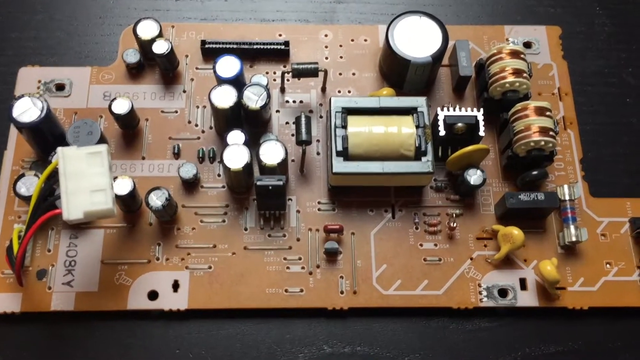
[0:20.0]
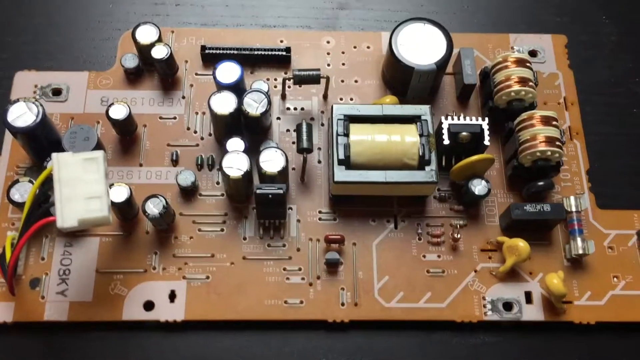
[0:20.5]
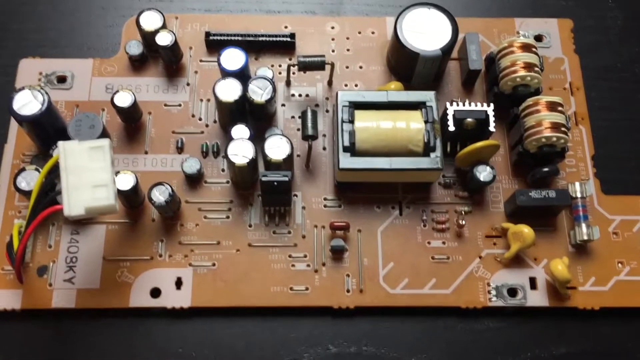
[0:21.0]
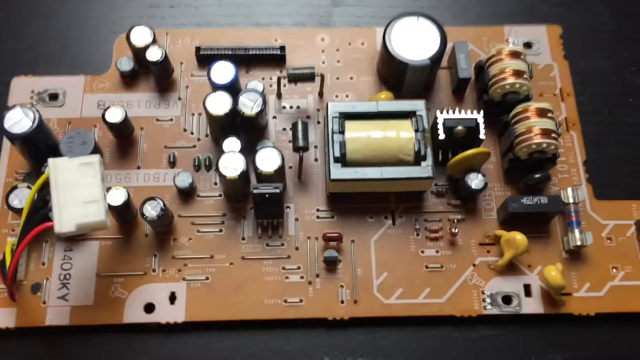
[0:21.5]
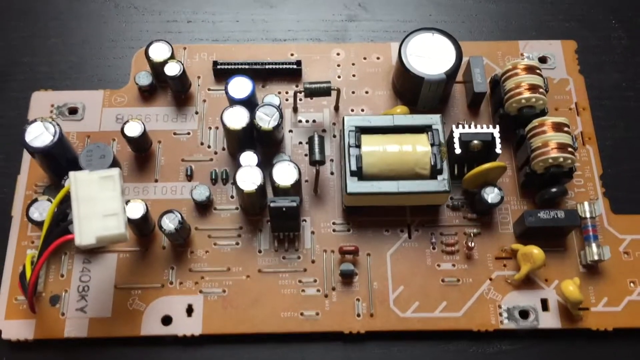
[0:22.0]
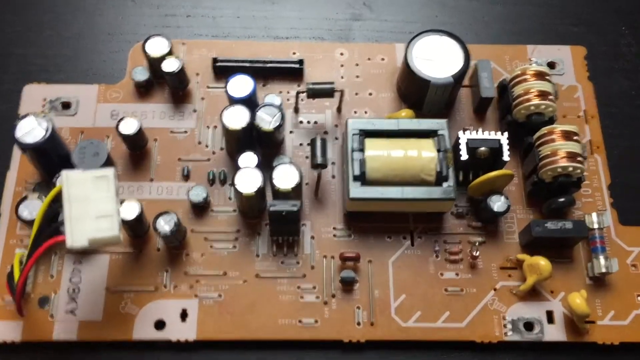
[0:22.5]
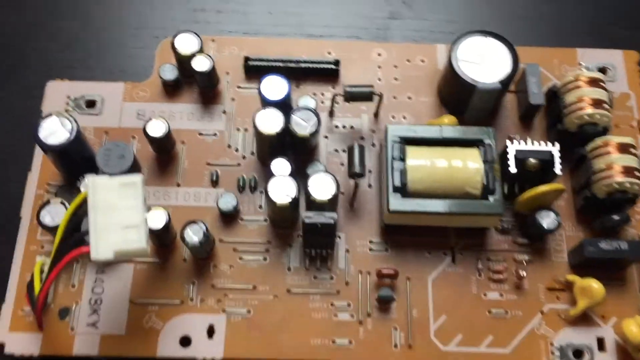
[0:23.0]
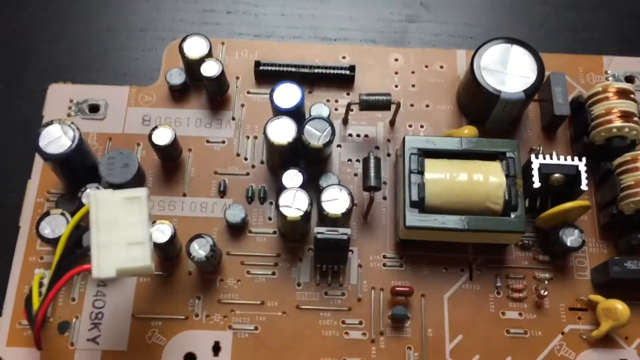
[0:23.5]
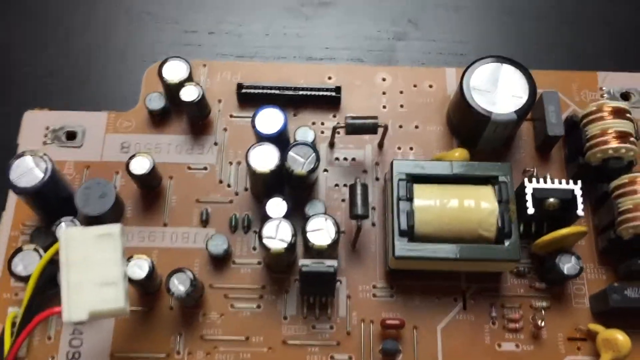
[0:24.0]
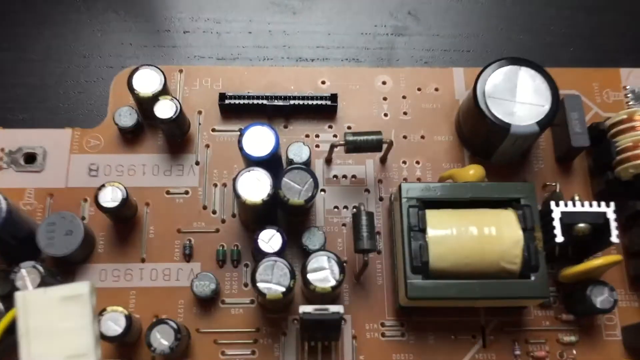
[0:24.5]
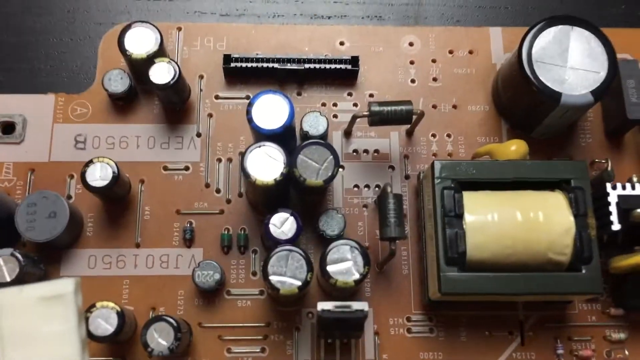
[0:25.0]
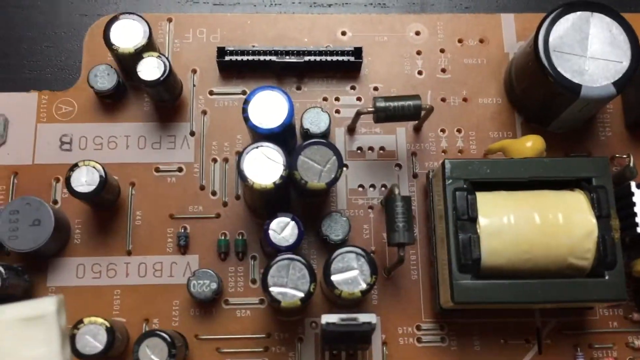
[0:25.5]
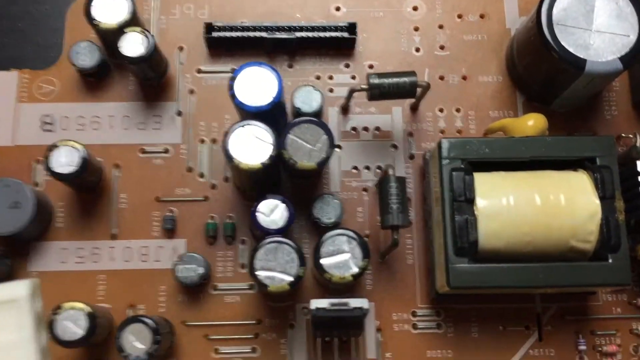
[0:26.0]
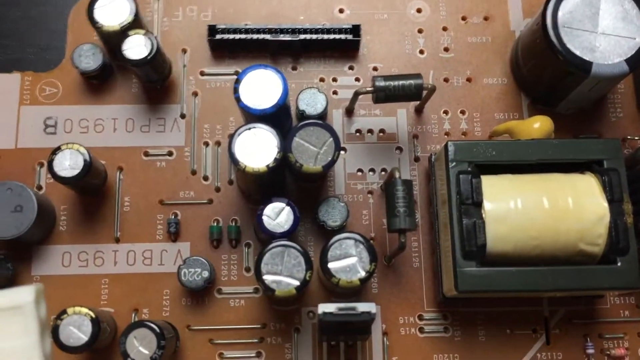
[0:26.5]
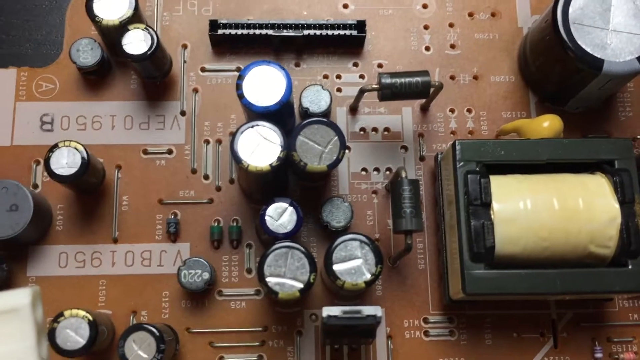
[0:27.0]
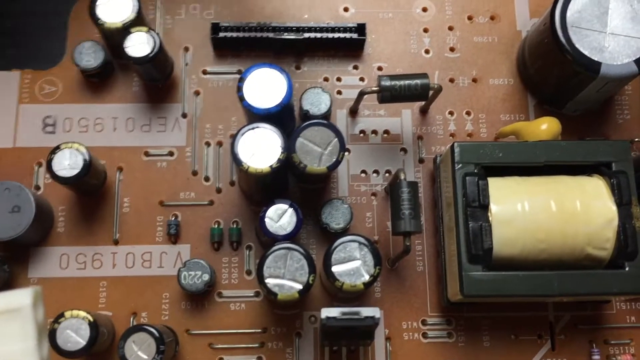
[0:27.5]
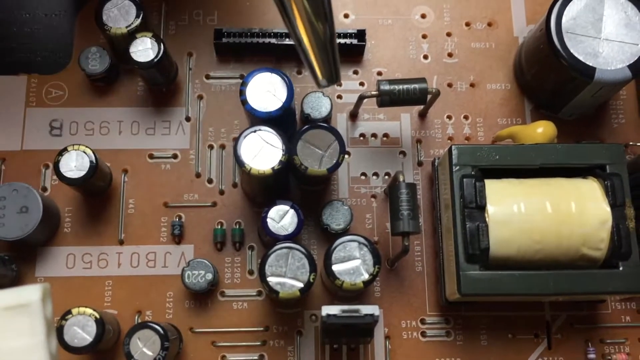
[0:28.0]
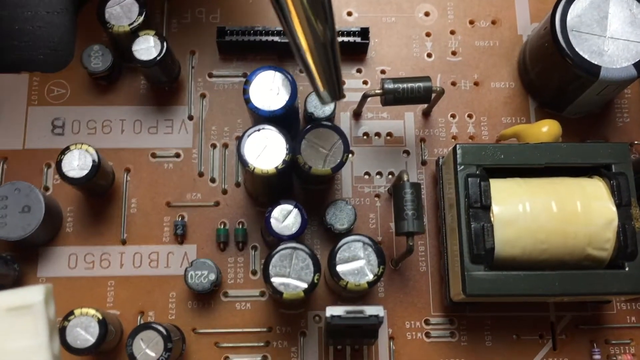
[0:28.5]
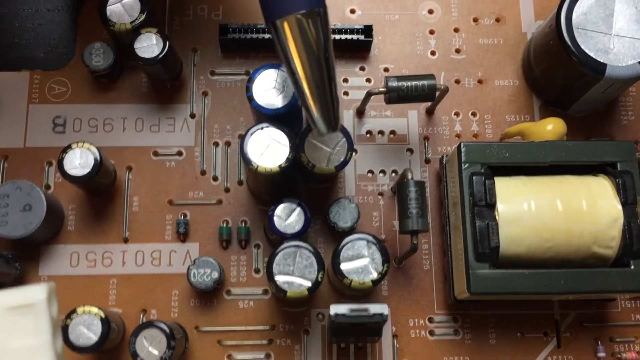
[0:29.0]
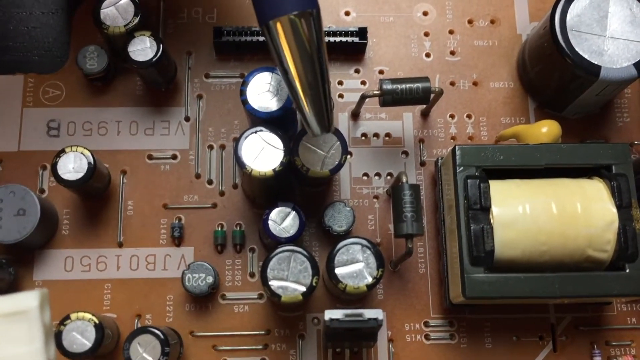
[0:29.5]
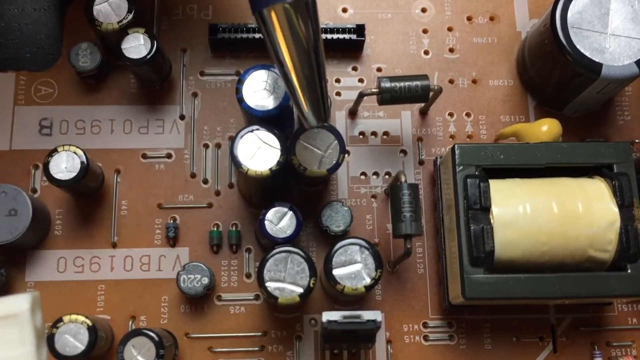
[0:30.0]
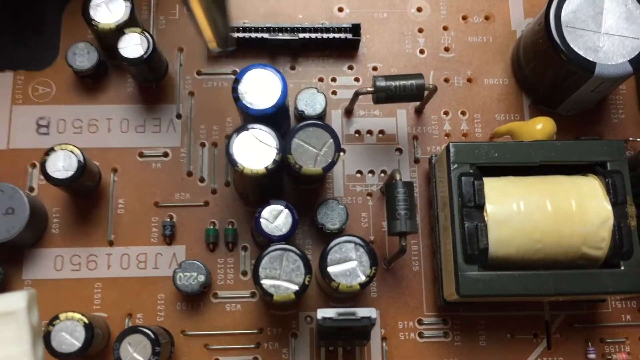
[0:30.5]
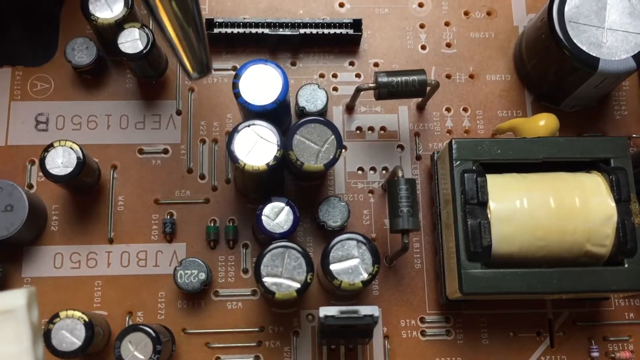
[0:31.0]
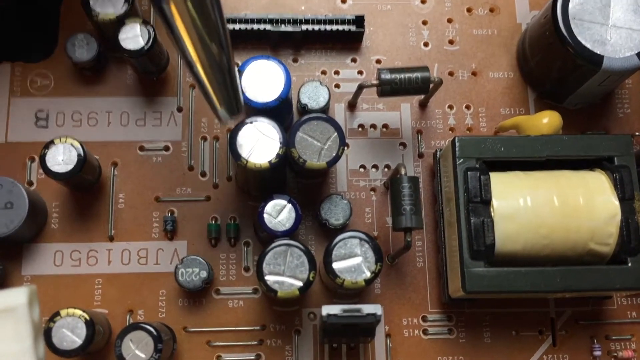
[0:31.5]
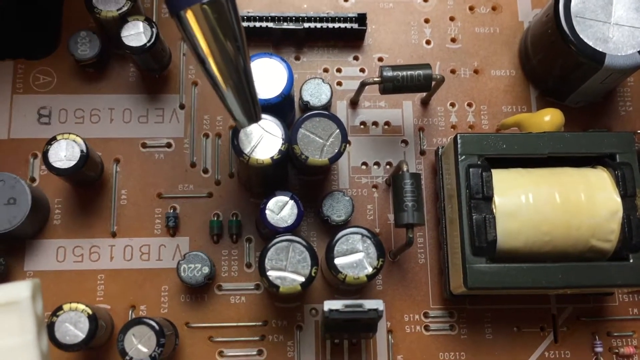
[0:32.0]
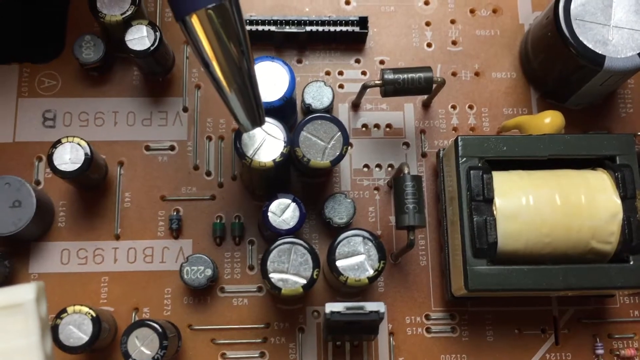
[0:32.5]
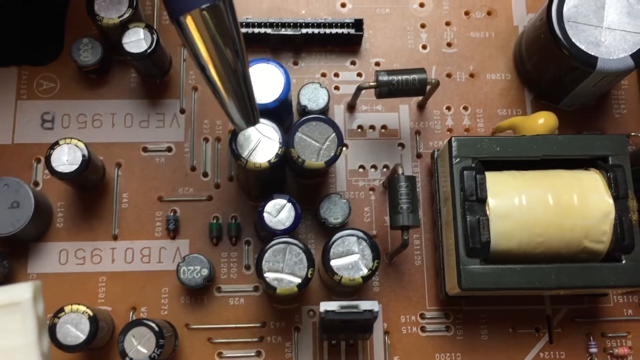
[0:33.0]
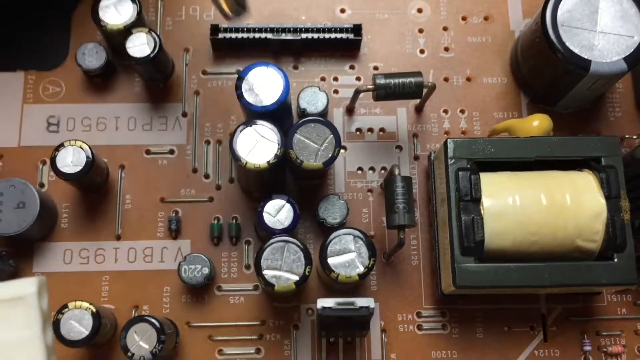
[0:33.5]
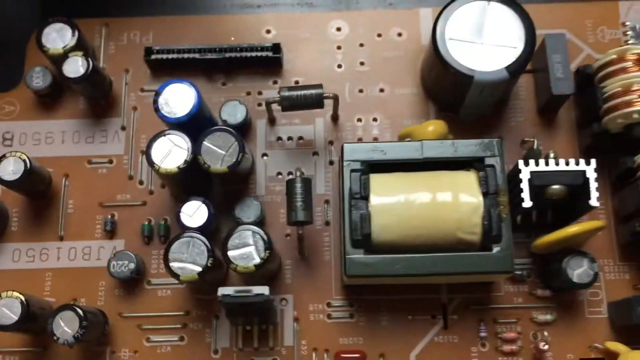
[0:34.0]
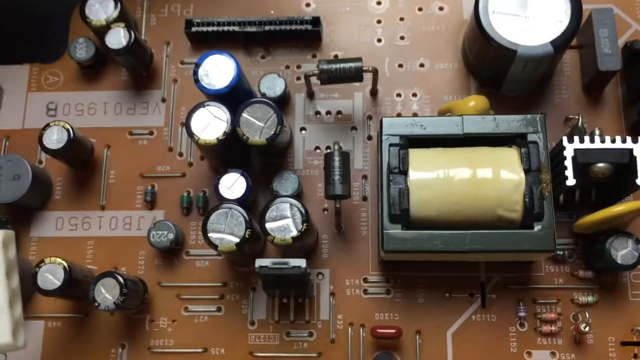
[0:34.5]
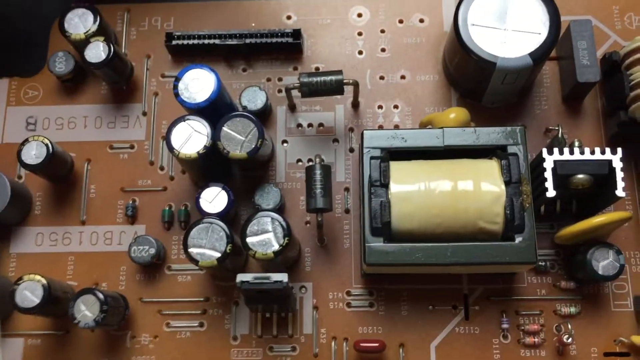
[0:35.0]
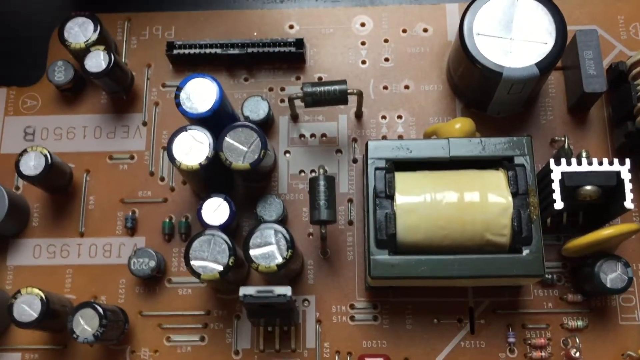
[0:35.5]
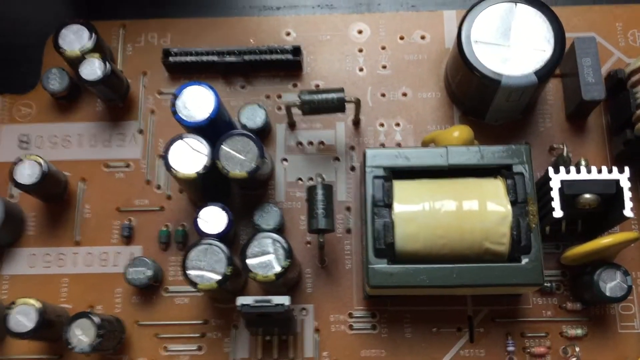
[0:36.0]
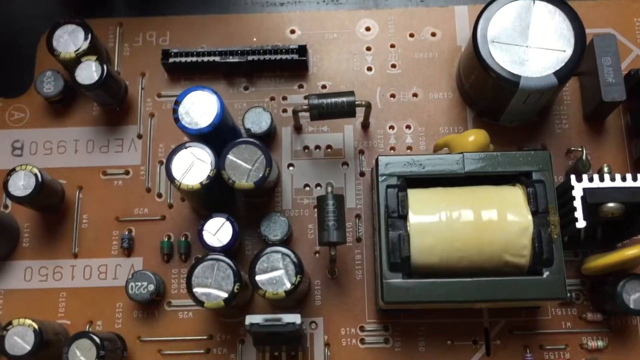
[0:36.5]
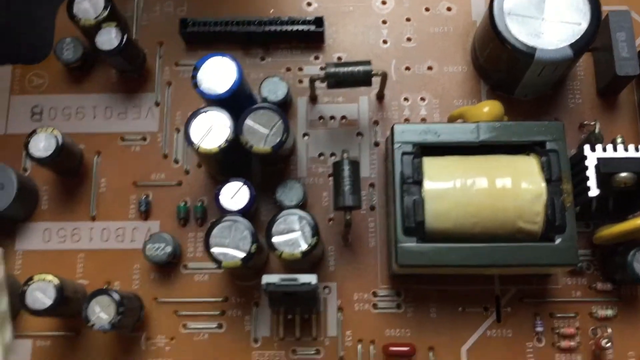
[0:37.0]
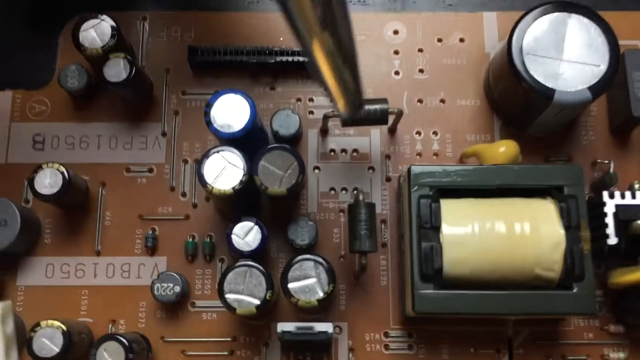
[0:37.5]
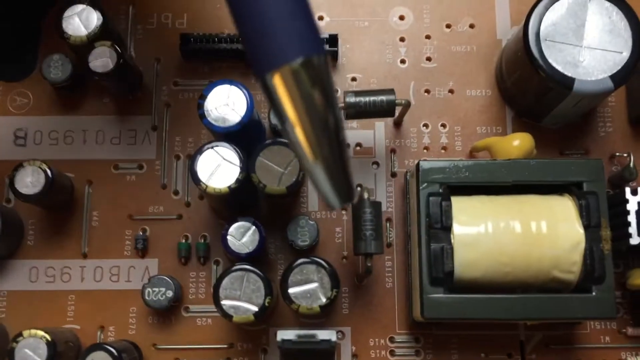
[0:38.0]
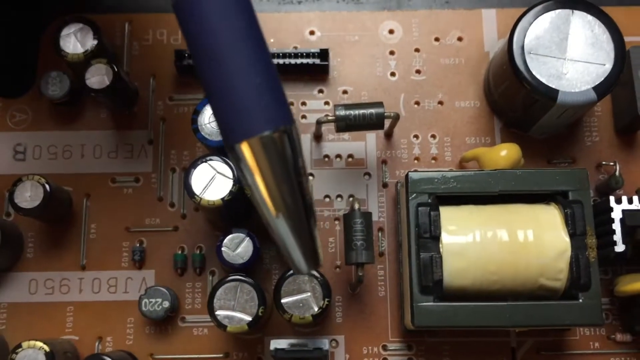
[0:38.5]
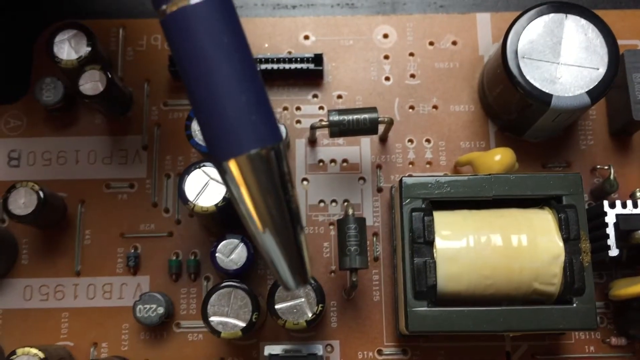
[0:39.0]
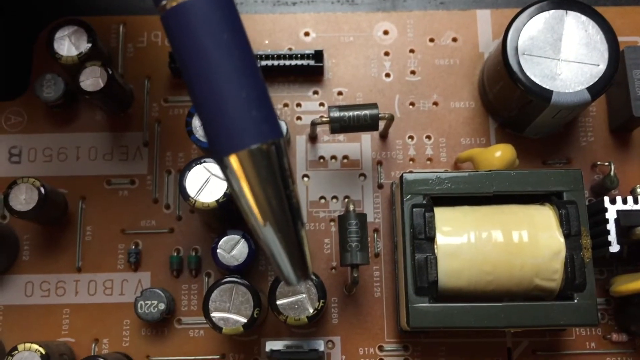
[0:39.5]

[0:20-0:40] The camera hovers over the board and then moves up to focus on the top center area of the Panasonic circuit board. Several circular, cylinder-like pieces are in view, with the yellow row on the right. These pieces have sort of silver caps, but are mostly black, with black sides. The person brings in an object that is black with a yellow bar in the center, sort of like thick tweezers or a pincher, though it may be some kind of blower. The person sort of blows on the tops of two tall black cylinders just below a blue one in the very top row, and a very short one to the right of that. Then the object comes back in and blows on the top of the bottom right cylinder, which is the same height as the others.